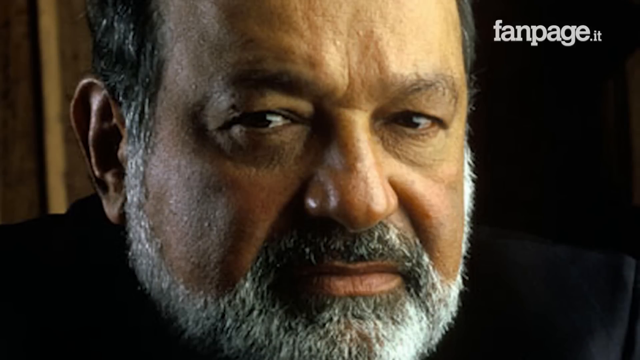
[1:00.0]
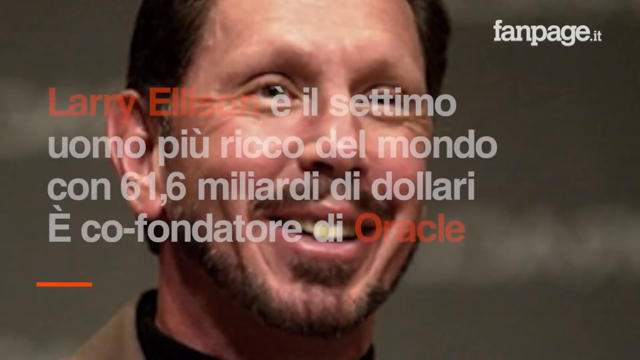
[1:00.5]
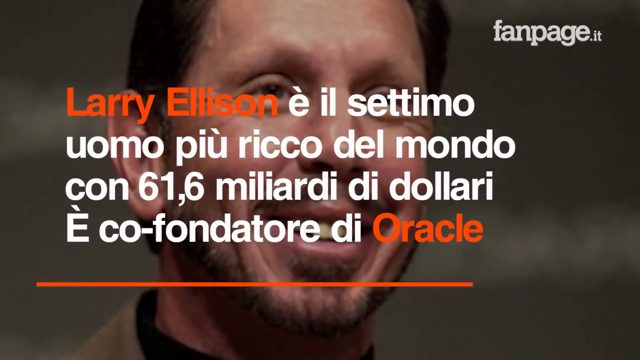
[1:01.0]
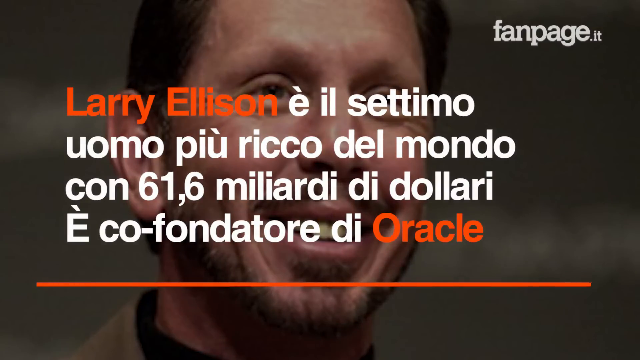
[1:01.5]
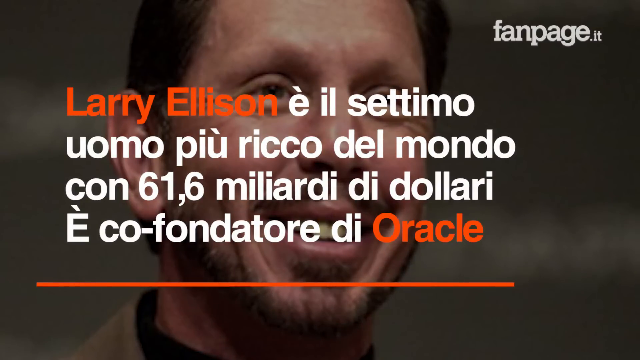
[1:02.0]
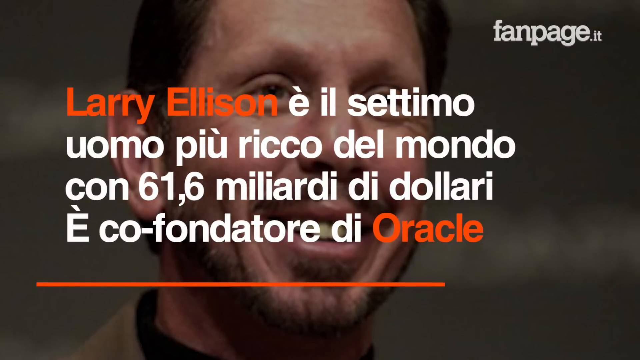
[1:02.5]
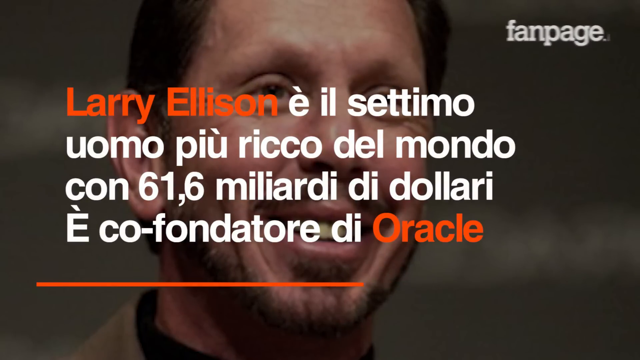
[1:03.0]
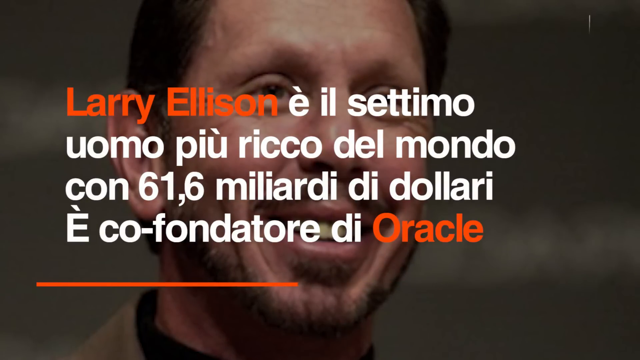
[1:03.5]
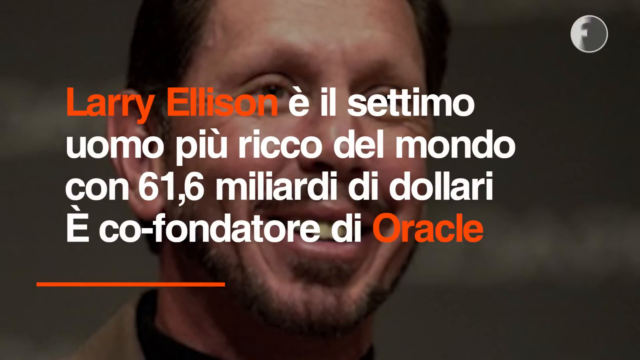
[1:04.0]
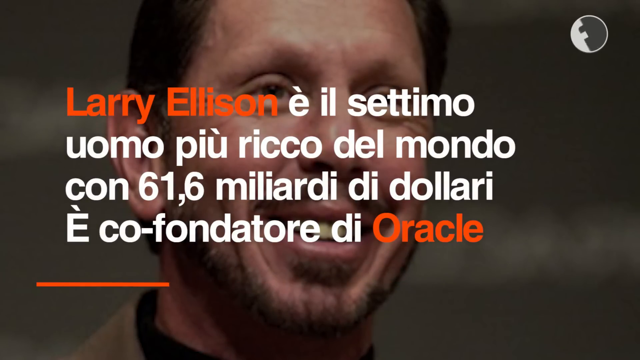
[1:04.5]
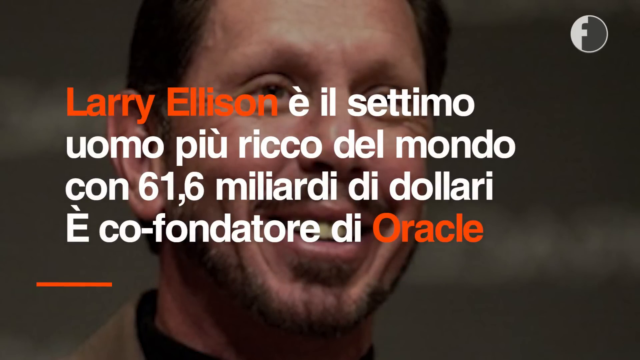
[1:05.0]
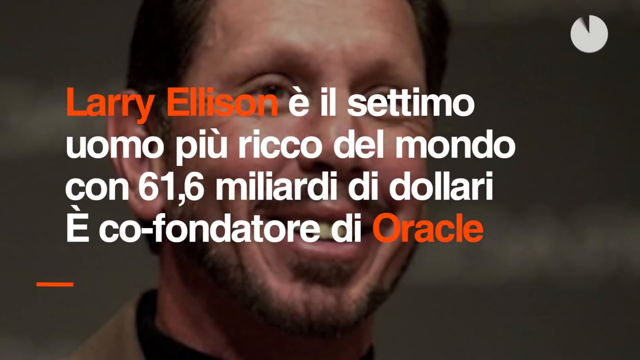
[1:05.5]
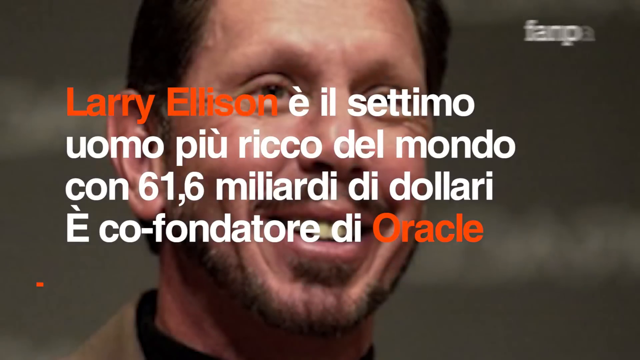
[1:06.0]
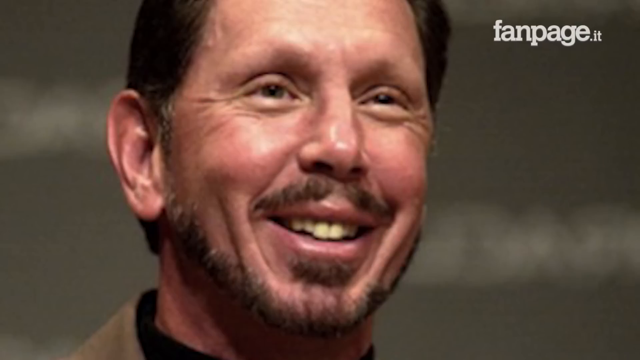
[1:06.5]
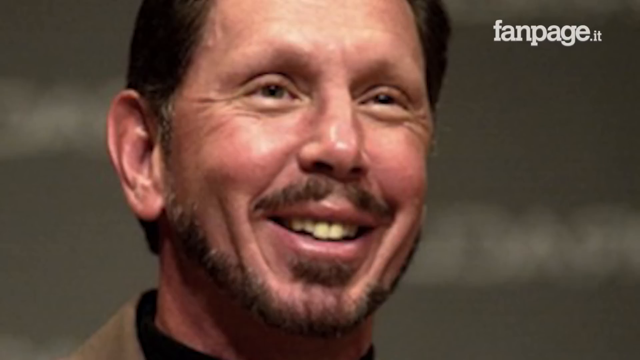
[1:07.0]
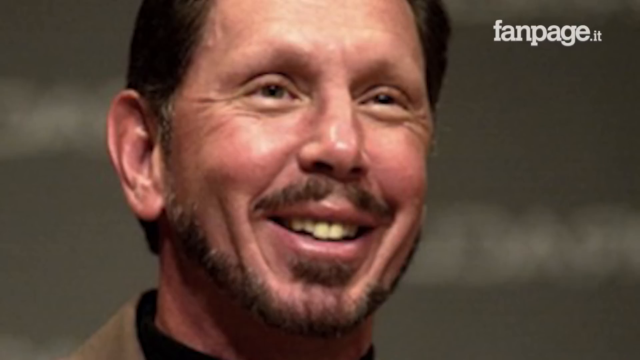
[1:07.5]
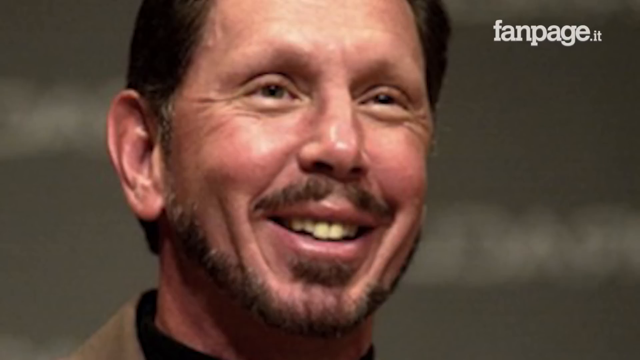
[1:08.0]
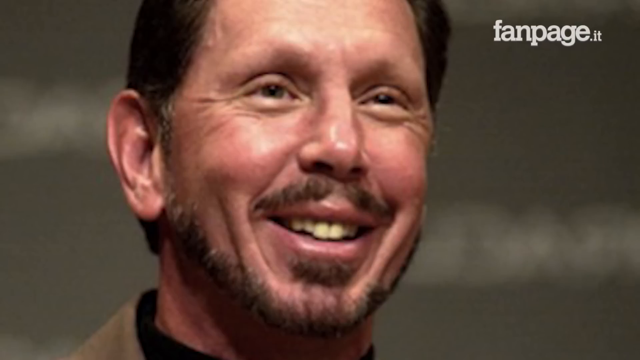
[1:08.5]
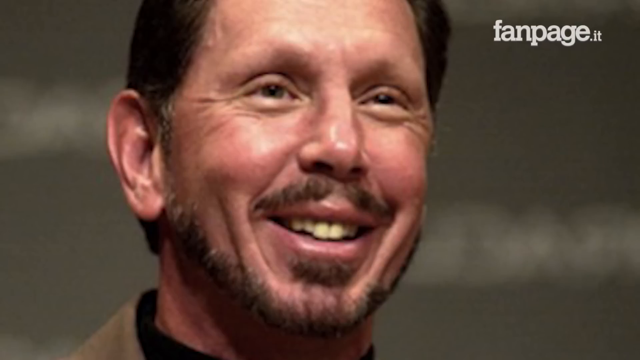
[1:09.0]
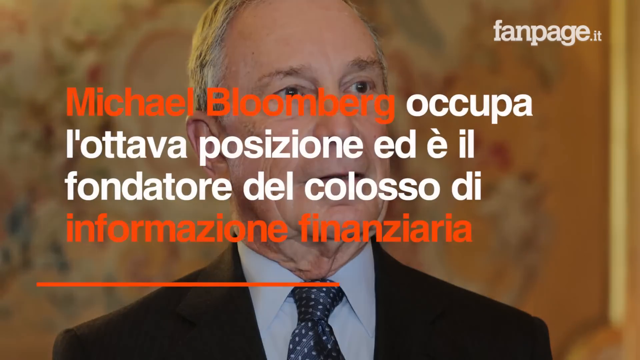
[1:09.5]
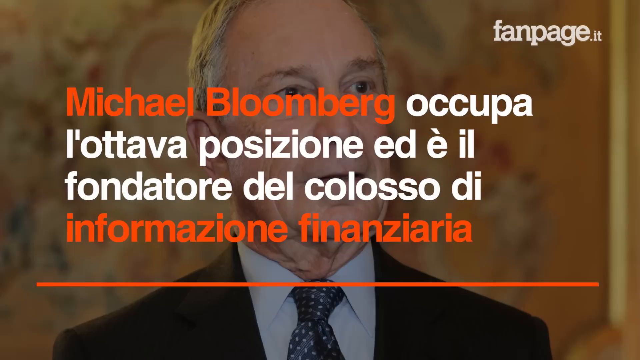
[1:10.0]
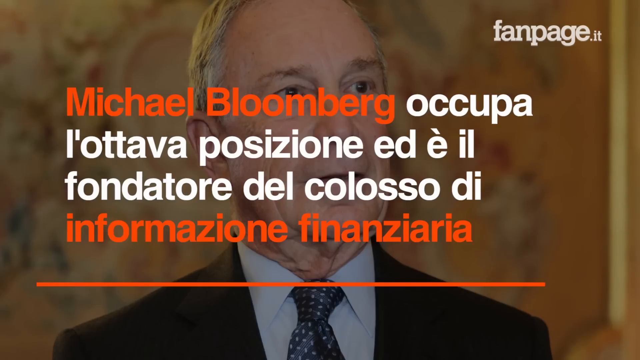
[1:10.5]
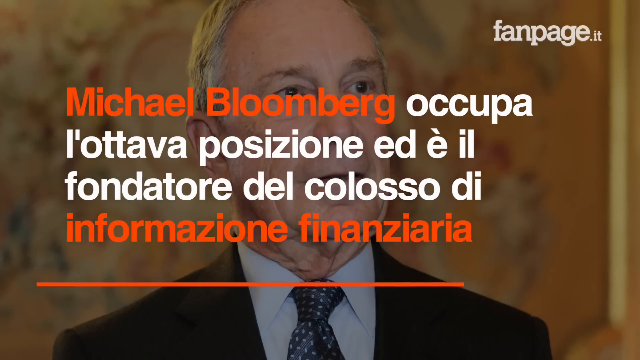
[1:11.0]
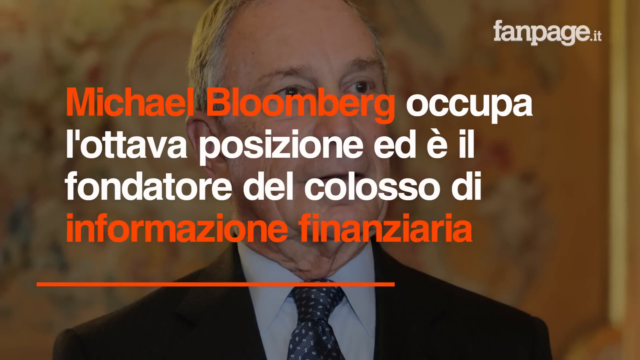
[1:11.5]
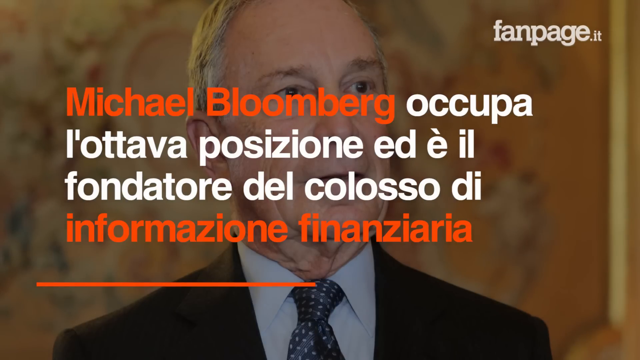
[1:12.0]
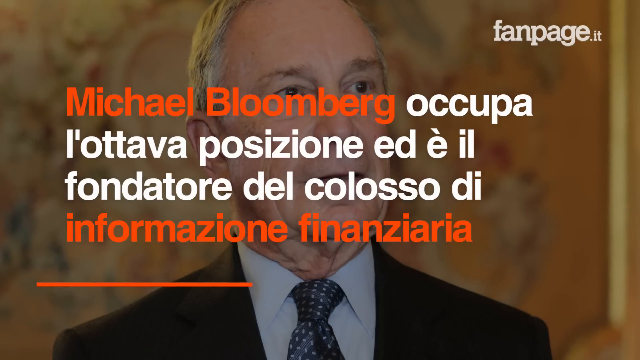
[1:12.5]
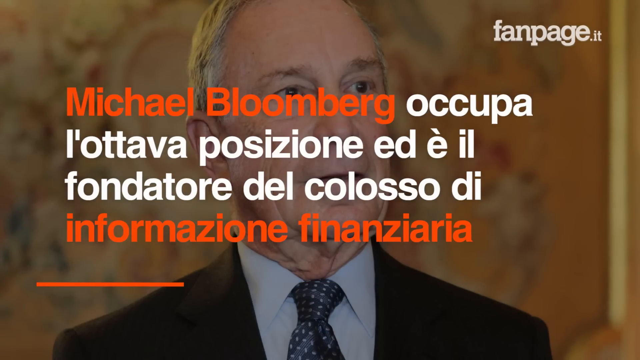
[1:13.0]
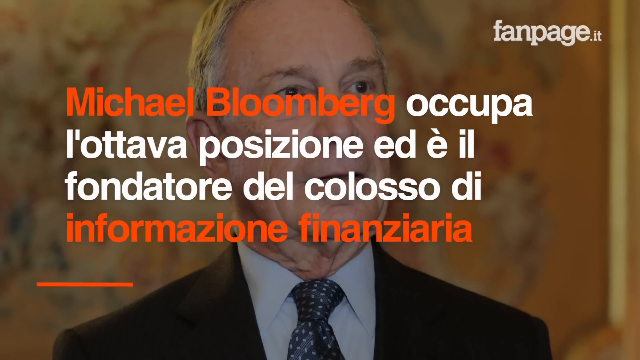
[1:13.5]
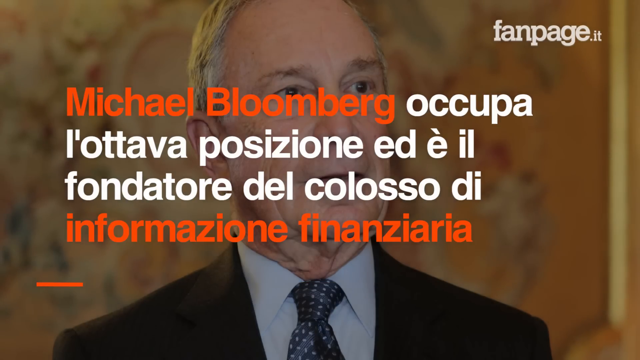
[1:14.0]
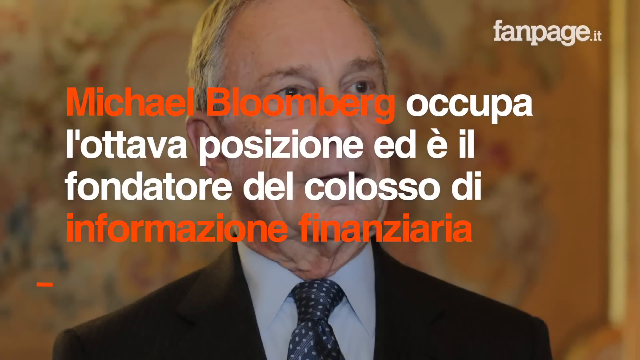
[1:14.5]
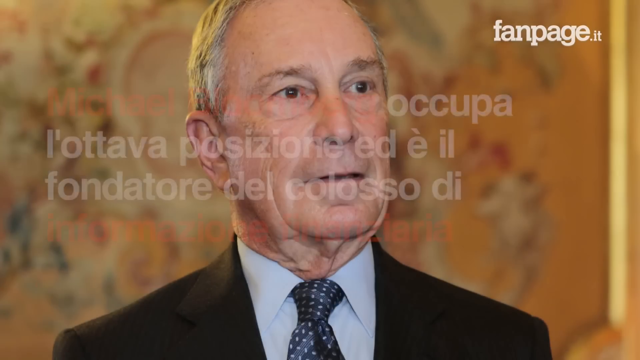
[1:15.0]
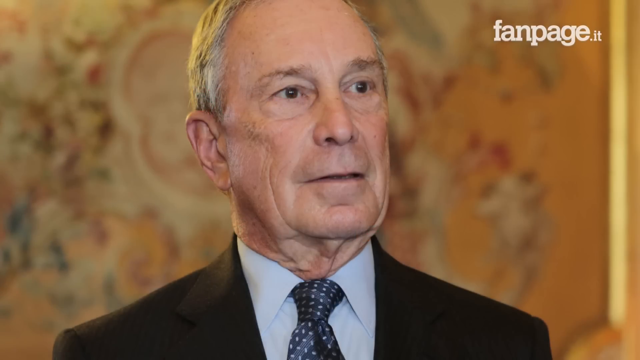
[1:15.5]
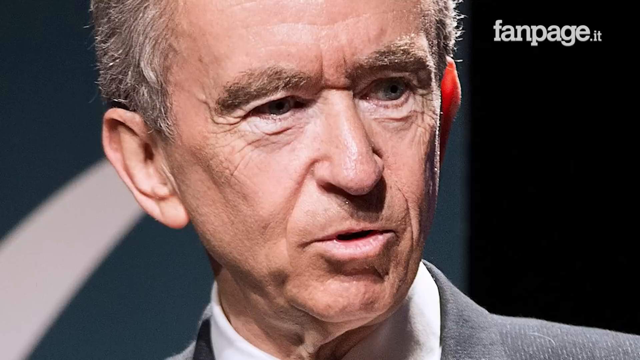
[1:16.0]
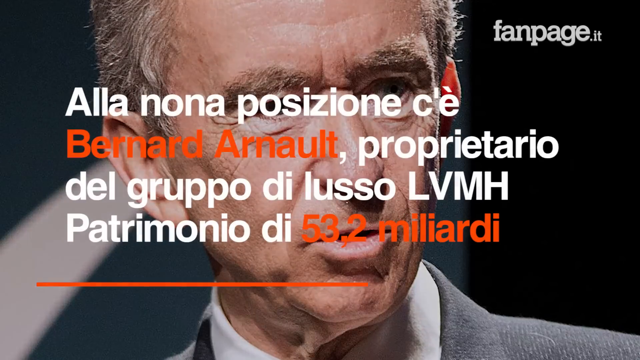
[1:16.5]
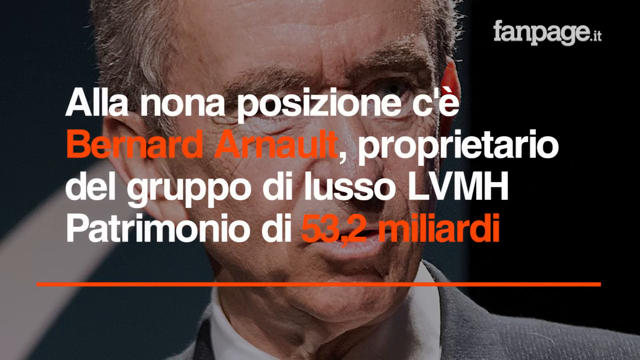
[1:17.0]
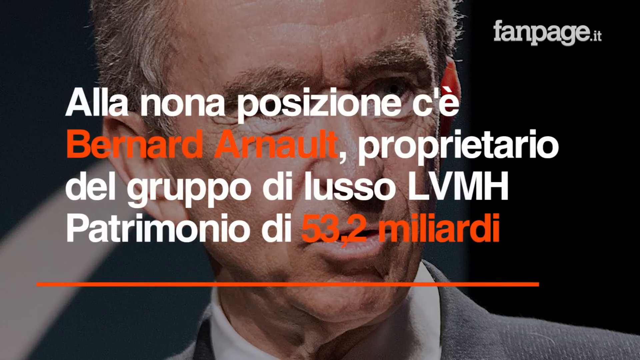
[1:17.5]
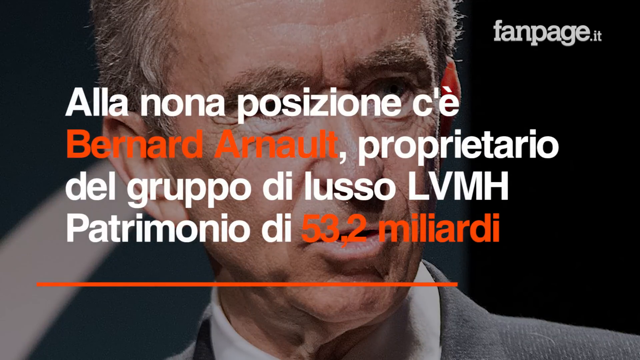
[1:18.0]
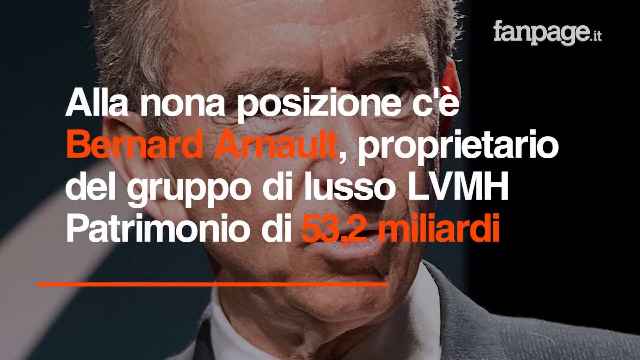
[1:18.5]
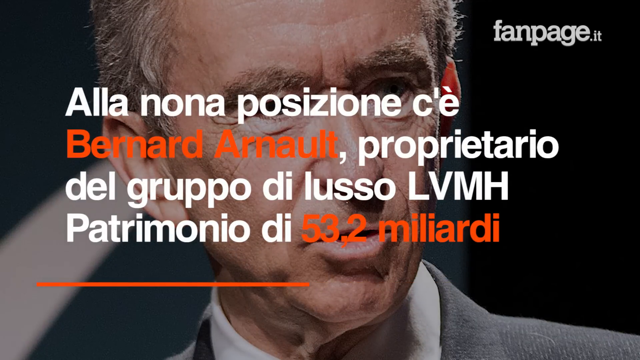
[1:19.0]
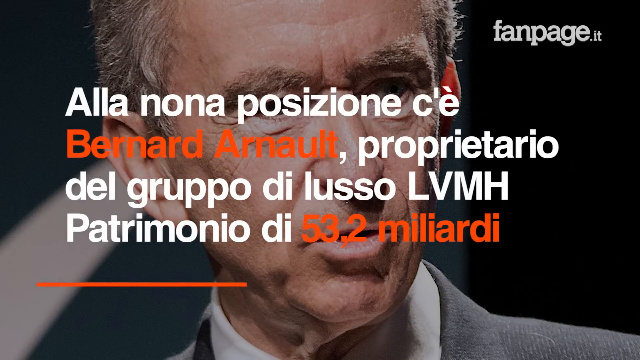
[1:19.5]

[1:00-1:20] Orange text reads "Nick Ellison", and the rest of the text is white except for the very last word, "Oracle". He looks to be maybe in his mid-40s, with dark hair, what looks like no eyebrows, a little bit of a beard and a mustache. He is smiling, looking forward and slightly to the left, with beady eyes. Next is an image of a man named Michael Bloomberg, whose name appears first in orange; the rest of the text is white except for the bottom line. He looks like a politician, with gray hair, bushy eyebrows and a saggy neck, wearing a white shirt, a blue tie with white polka dots and a black jacket. The background behind him is a somewhat orangish tan. He looks up slightly to the right and is clean-shaven. The video then cuts to another man with graying hair on the sides, bushy but short shaved eyebrows, a few wrinkles and pursed lips. White text runs across the screen; the second line has his name, "Bernard Arnault", in orange, and the last portion about the money is also in orange.